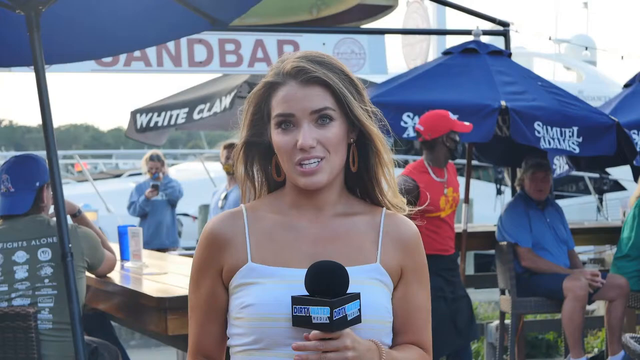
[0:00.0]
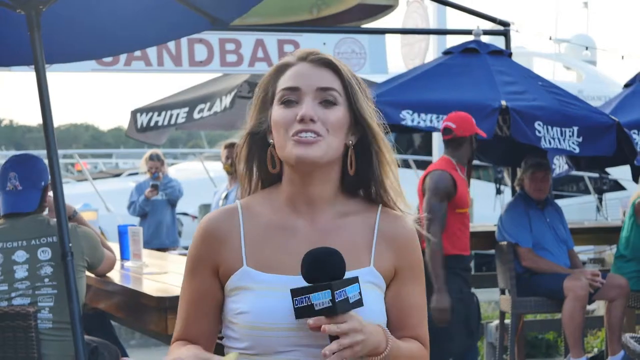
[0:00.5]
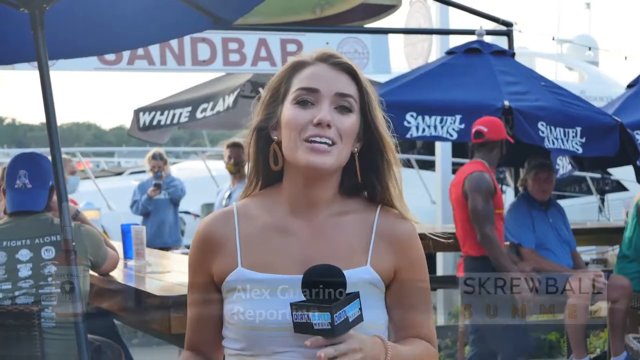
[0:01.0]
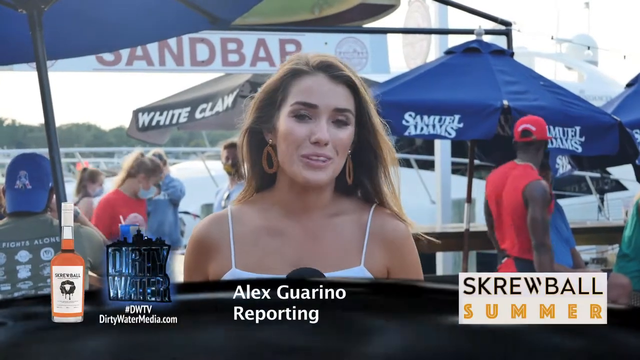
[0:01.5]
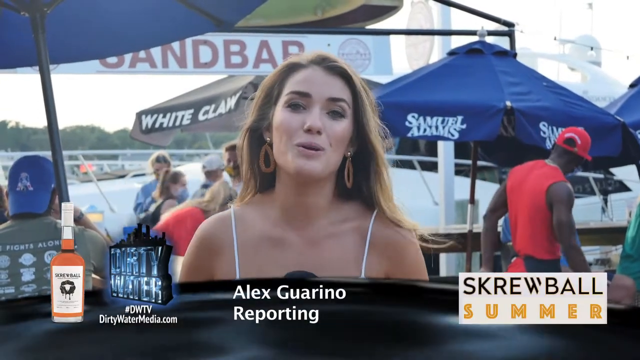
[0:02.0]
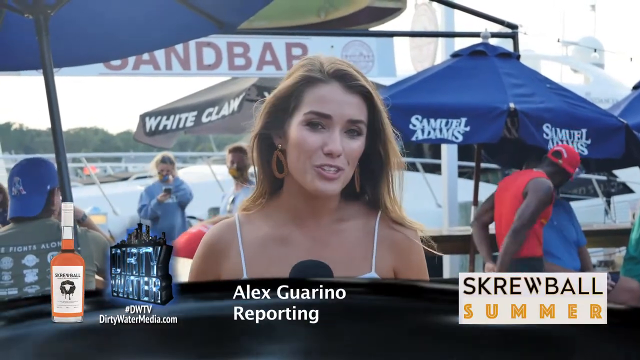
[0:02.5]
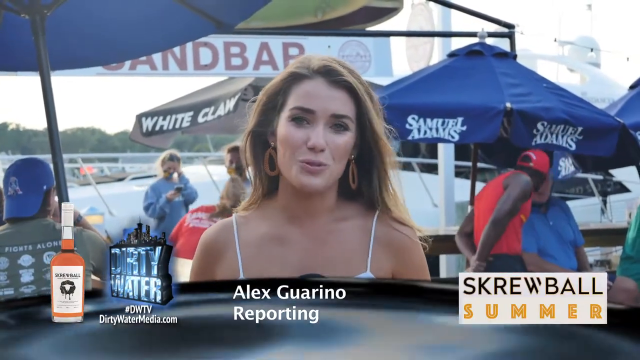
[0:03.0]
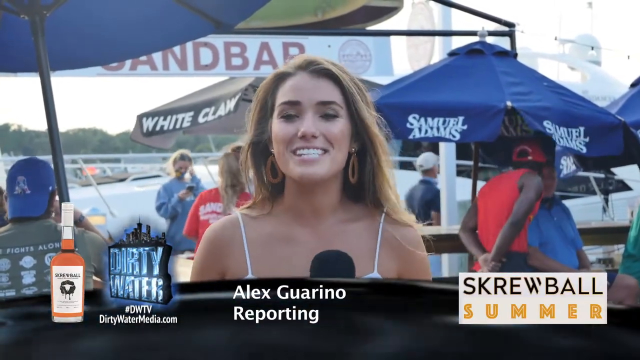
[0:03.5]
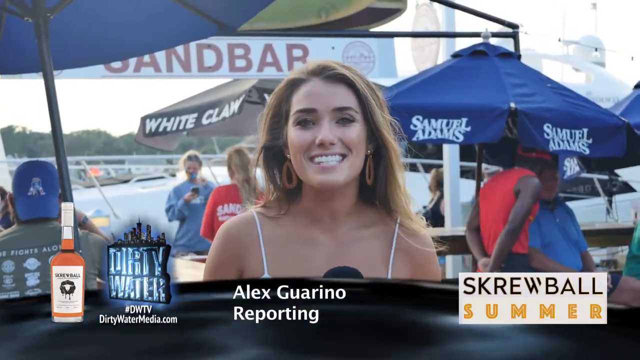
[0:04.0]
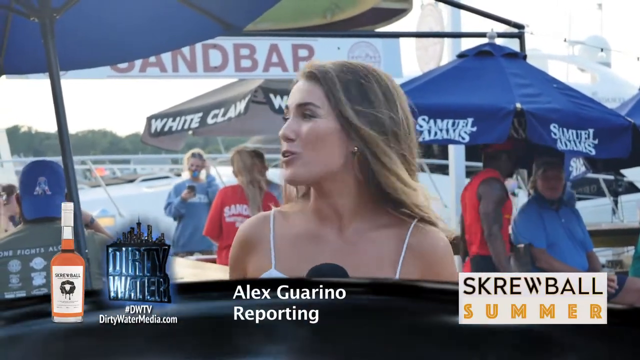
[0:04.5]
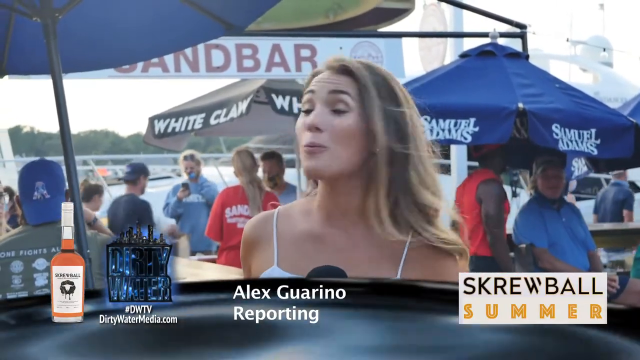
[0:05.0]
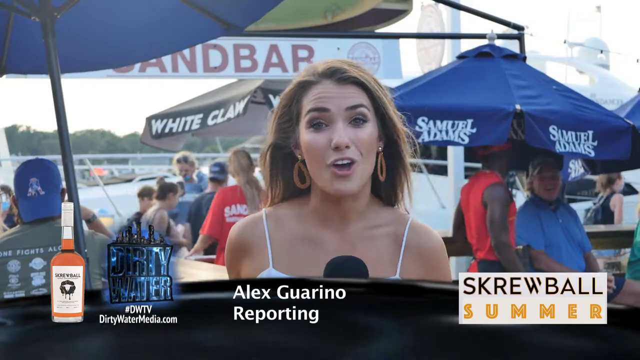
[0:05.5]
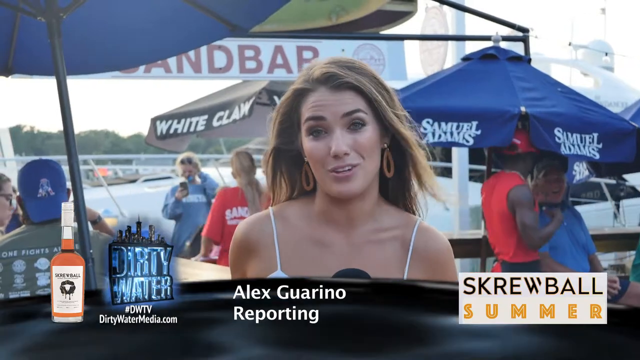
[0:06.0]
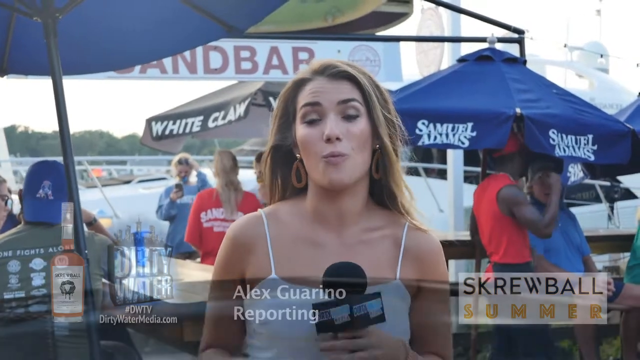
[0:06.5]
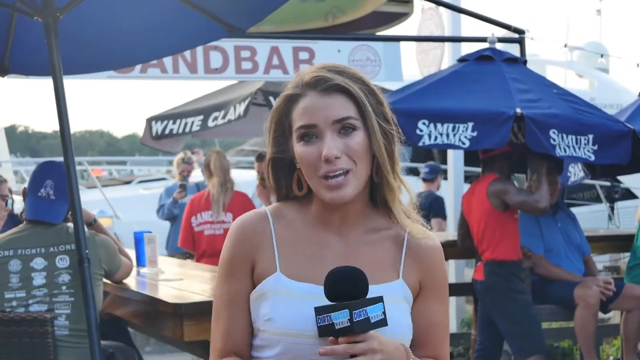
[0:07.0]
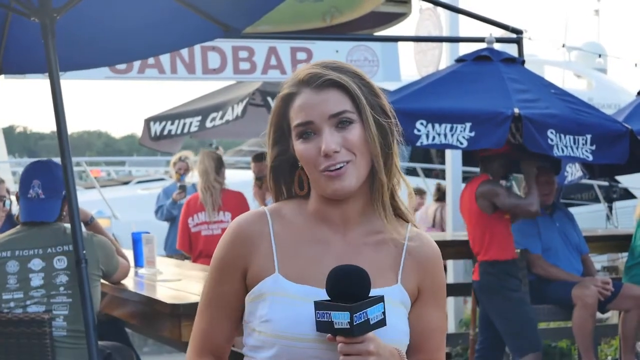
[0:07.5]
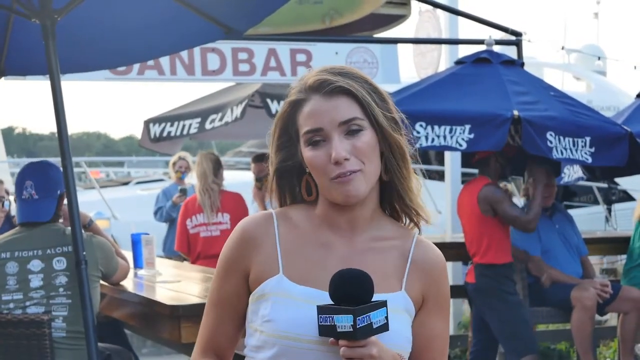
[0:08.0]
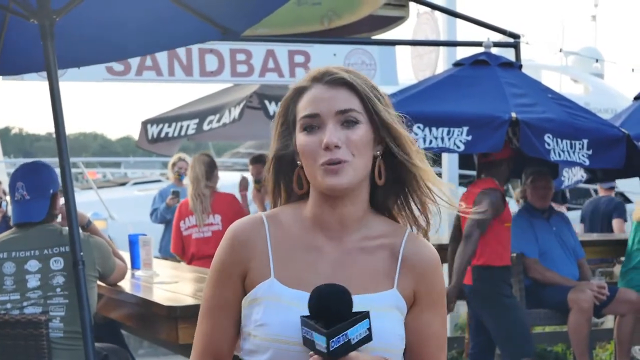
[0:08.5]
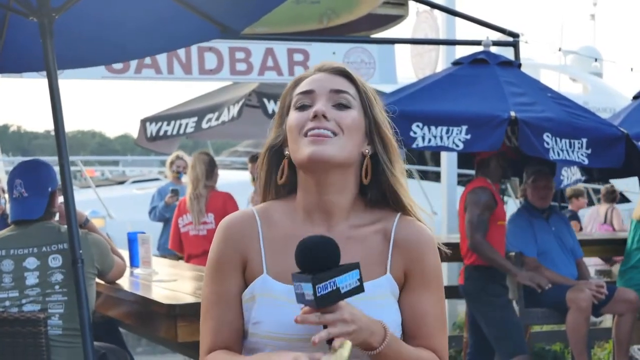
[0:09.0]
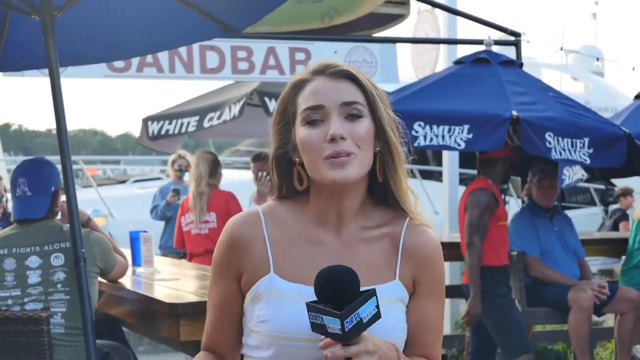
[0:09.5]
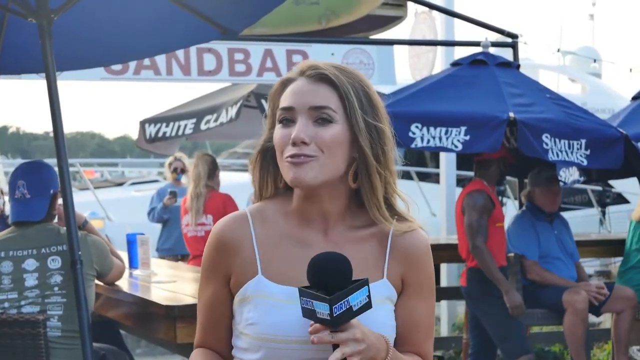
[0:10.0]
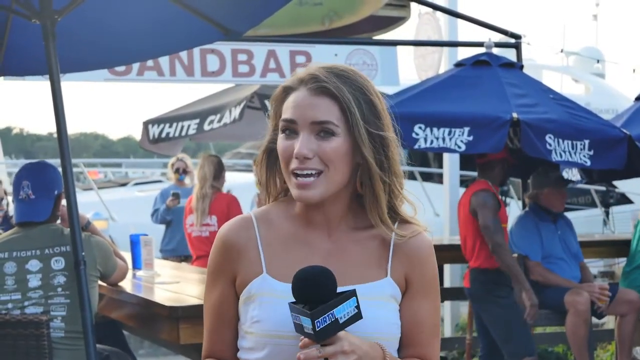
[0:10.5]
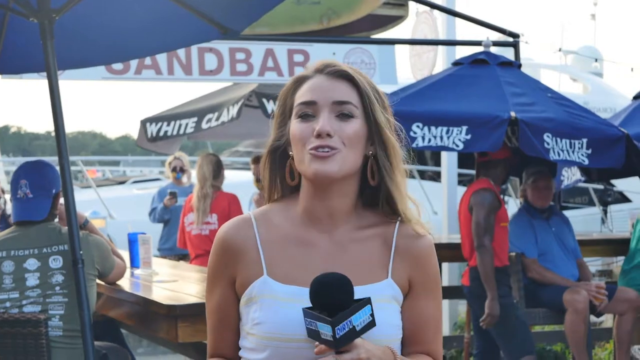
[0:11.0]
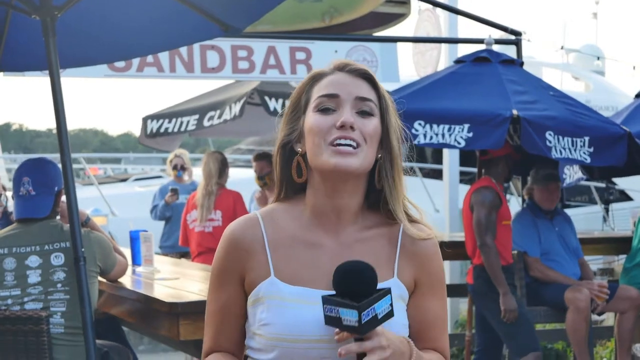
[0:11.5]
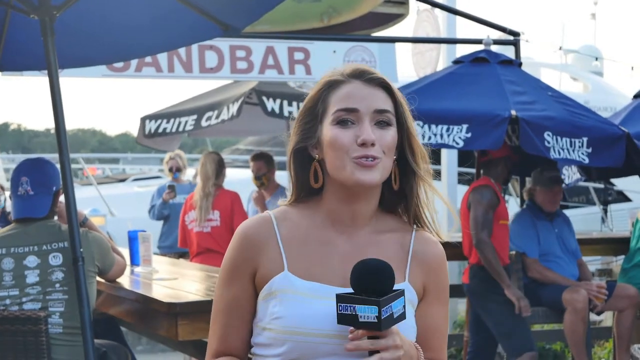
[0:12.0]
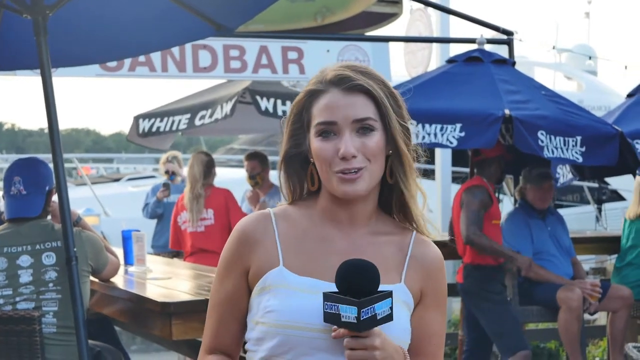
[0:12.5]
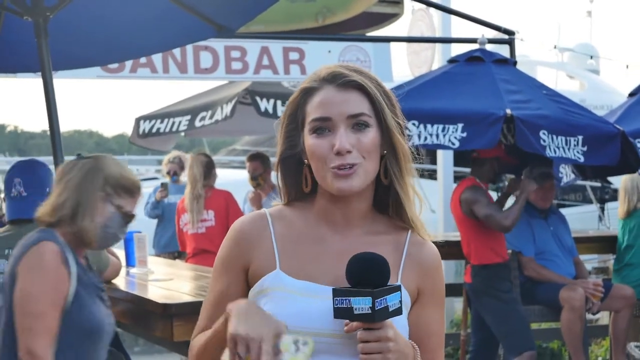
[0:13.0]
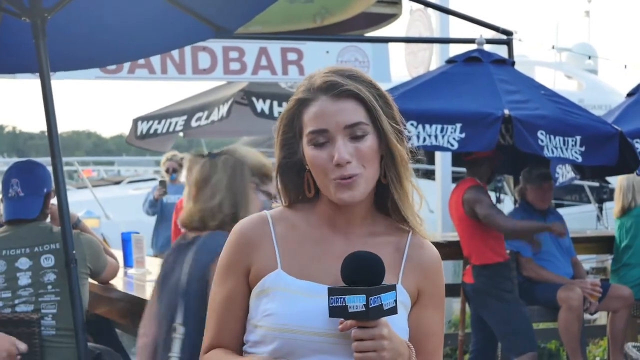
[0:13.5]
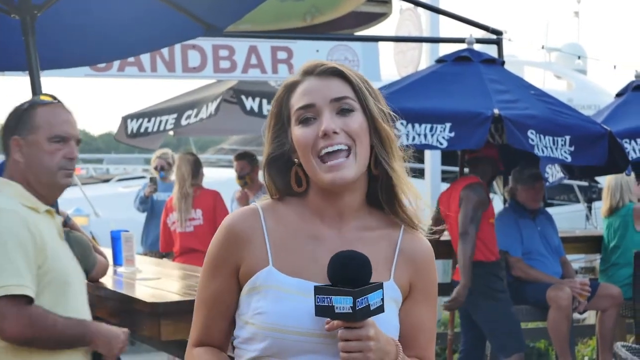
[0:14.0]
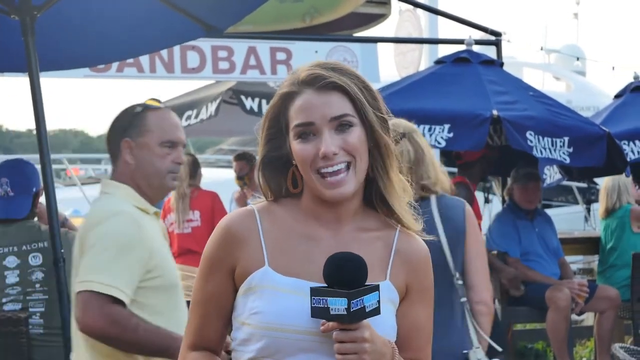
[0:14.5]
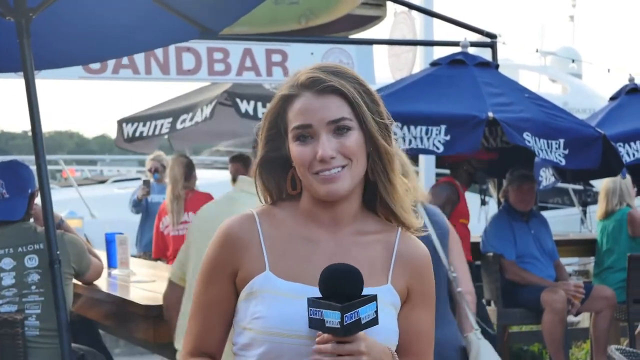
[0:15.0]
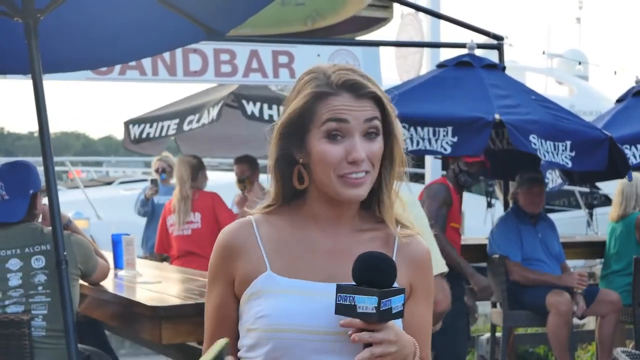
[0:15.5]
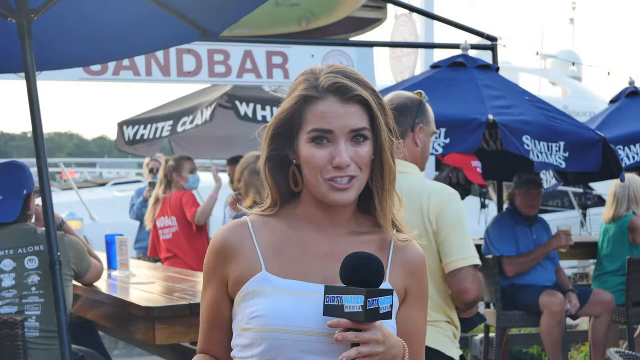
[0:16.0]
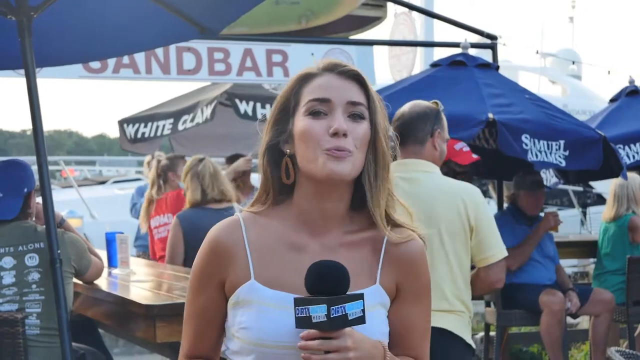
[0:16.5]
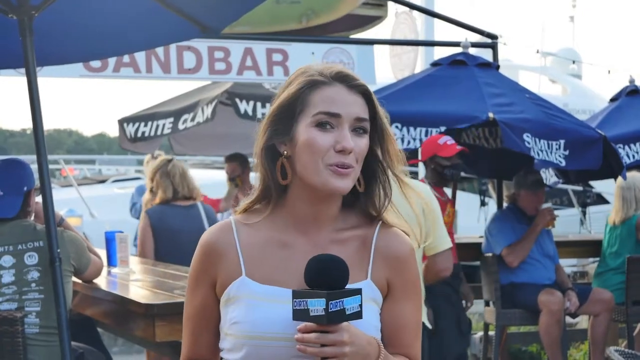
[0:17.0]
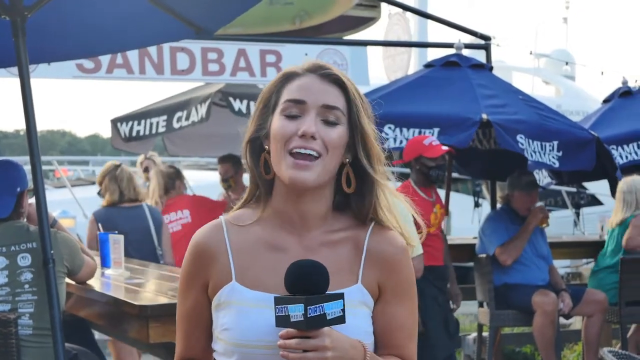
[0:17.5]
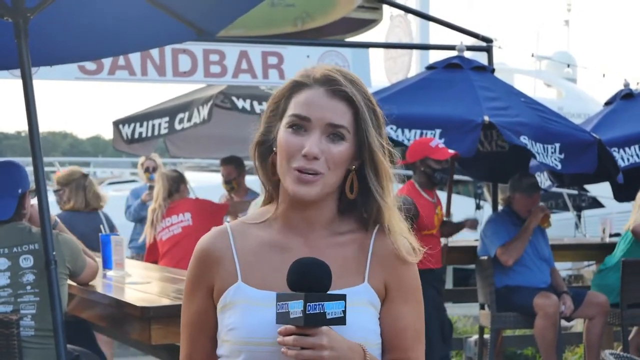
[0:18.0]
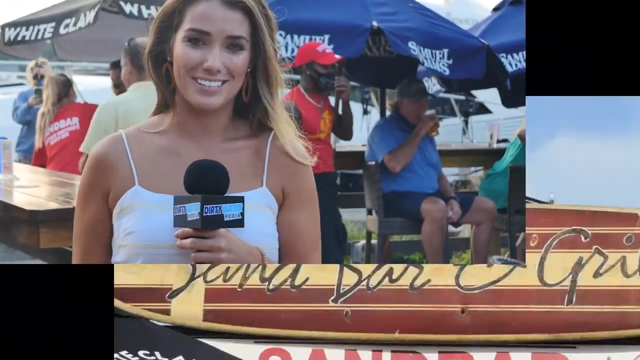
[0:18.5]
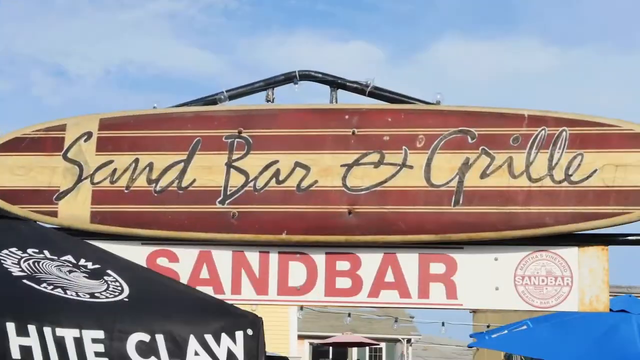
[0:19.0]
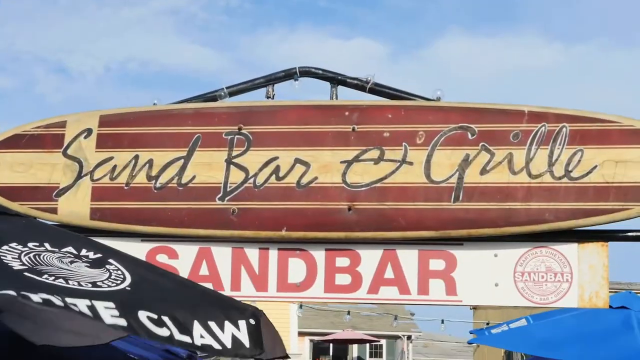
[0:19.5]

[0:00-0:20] A woman with brown hair, wearing a white top and holding a black microphone, stands on a beach where there are a lot of umbrellas. She seems to be a reporter named Alex Guarino. There is a blue umbrella and a black umbrella; the blue umbrella has "White Claw" written on it, and "Adams" is also written on it. In the background, men and women seem to be drinking on the beach with blue cups, apparently in some kind of drinking competition. Behind them there appear to be sea docks or a seashore. It seems to be a sunny, windy day, and the reporter's hair blows sideways. She seems excited about what she is reporting, and people look at the camera, seeming to have a good time.